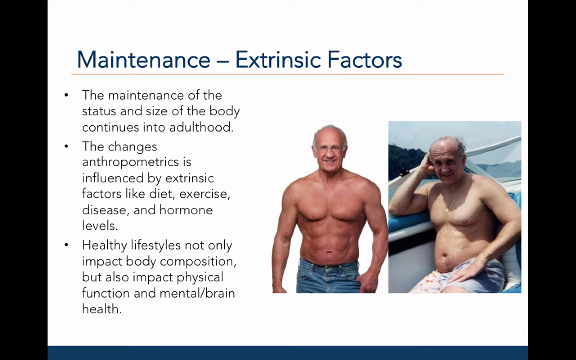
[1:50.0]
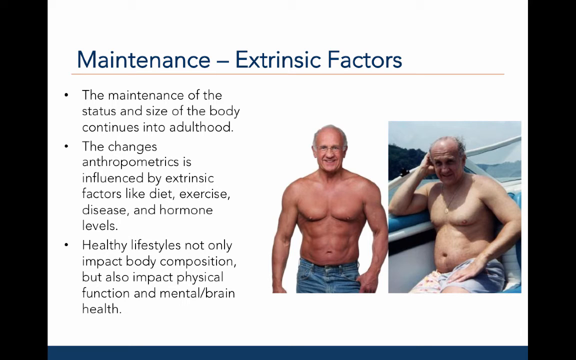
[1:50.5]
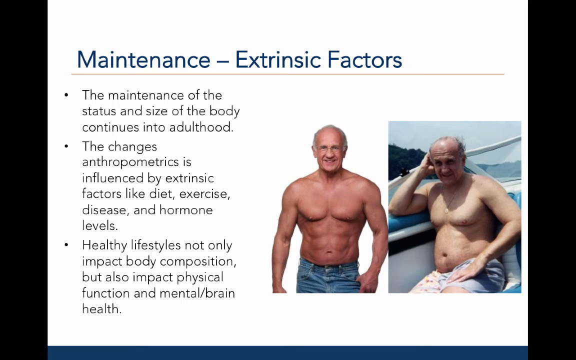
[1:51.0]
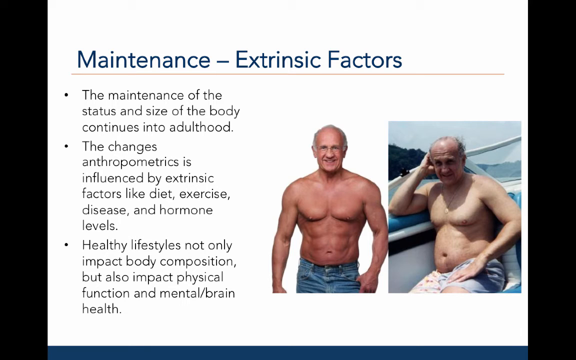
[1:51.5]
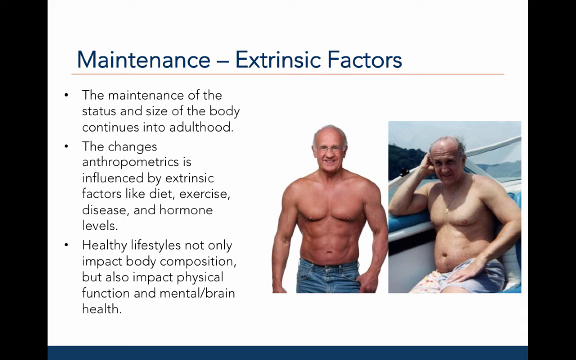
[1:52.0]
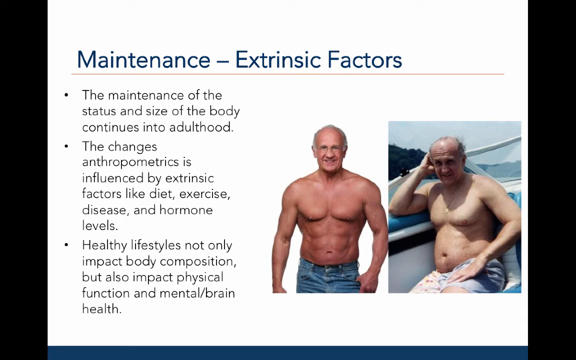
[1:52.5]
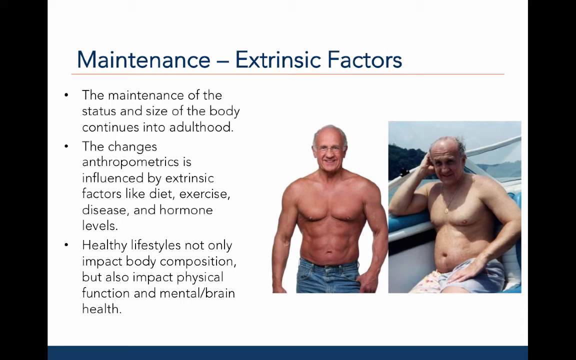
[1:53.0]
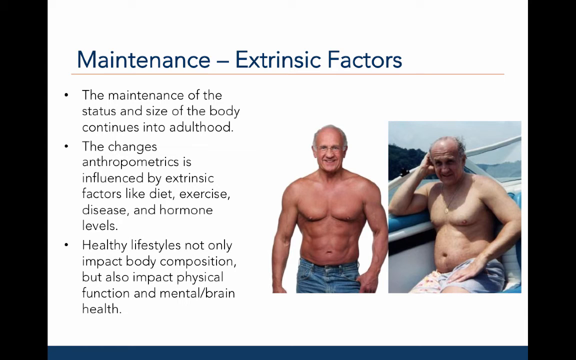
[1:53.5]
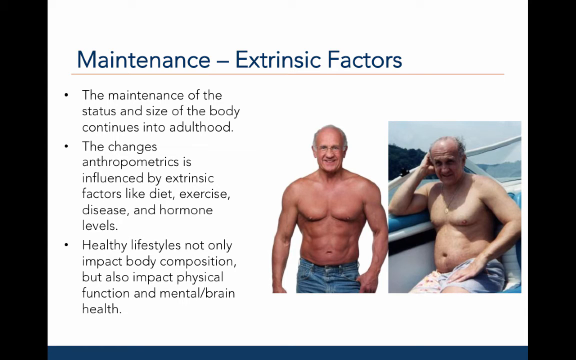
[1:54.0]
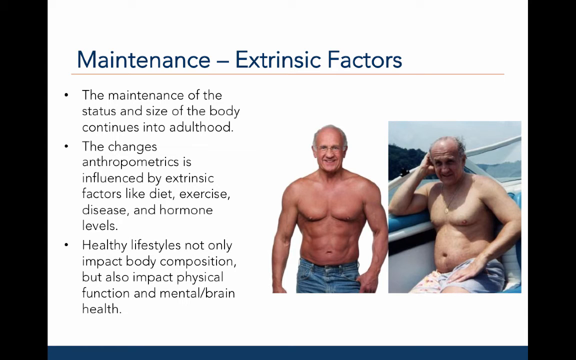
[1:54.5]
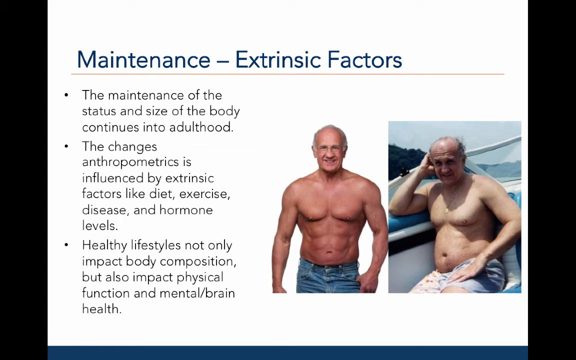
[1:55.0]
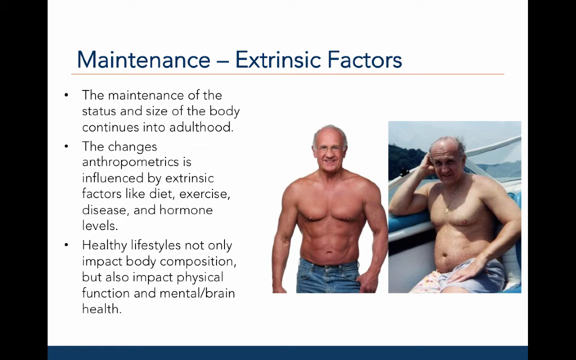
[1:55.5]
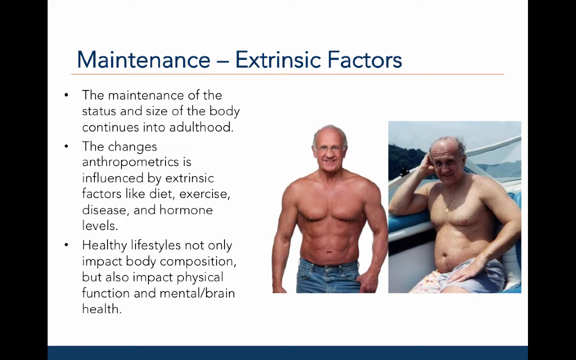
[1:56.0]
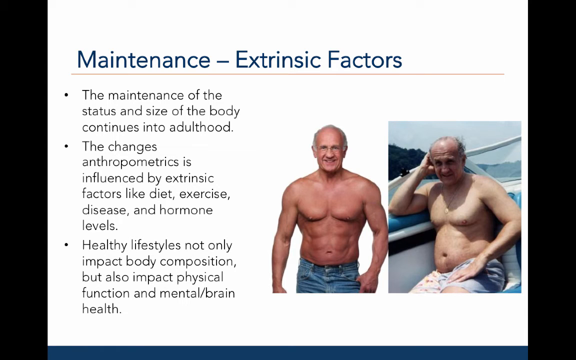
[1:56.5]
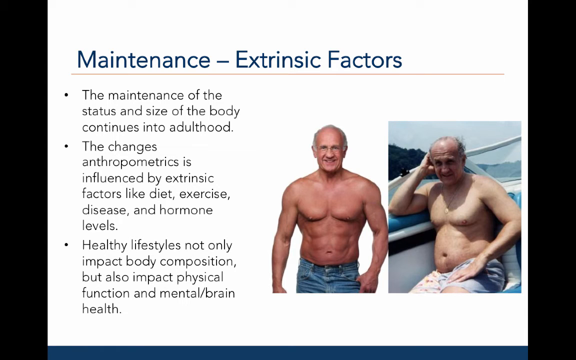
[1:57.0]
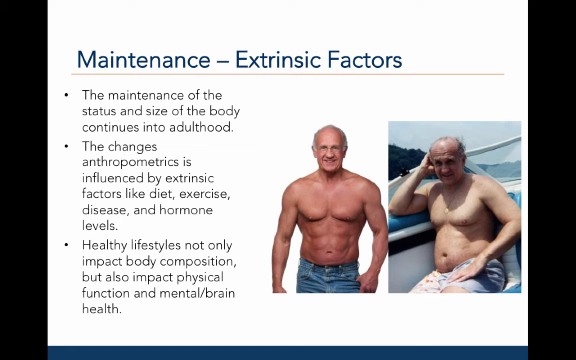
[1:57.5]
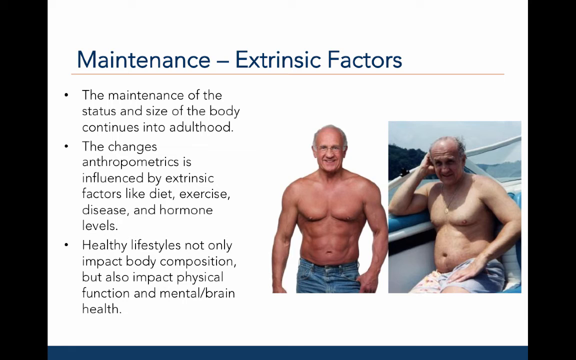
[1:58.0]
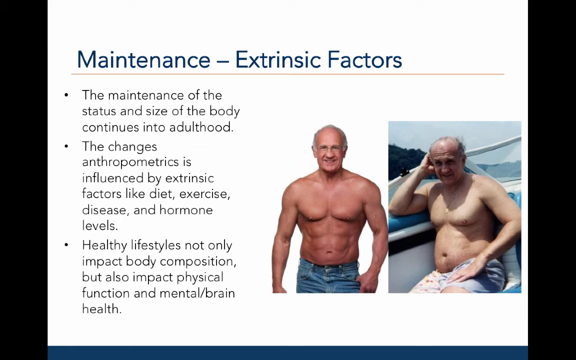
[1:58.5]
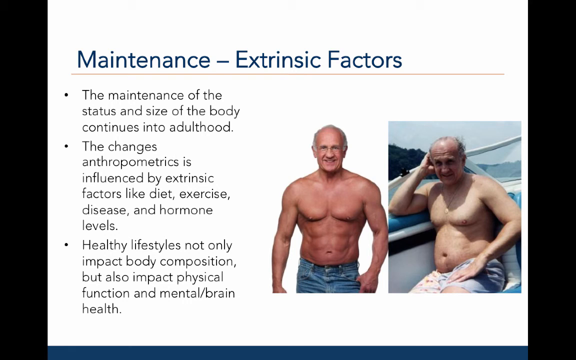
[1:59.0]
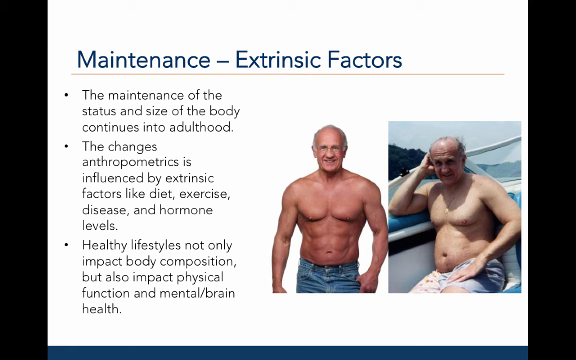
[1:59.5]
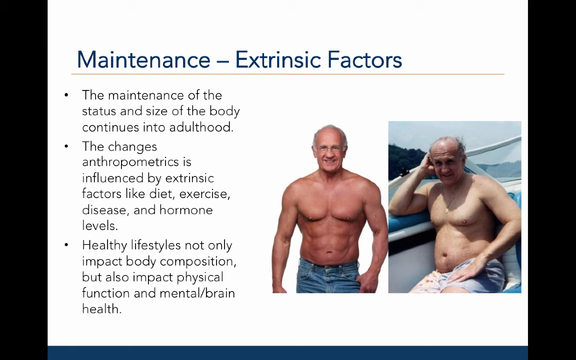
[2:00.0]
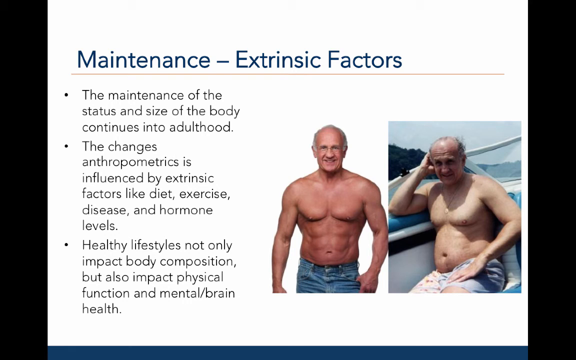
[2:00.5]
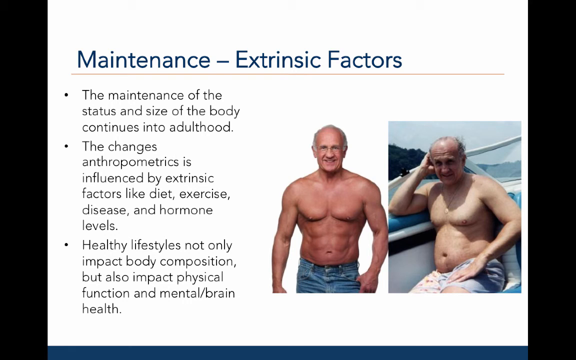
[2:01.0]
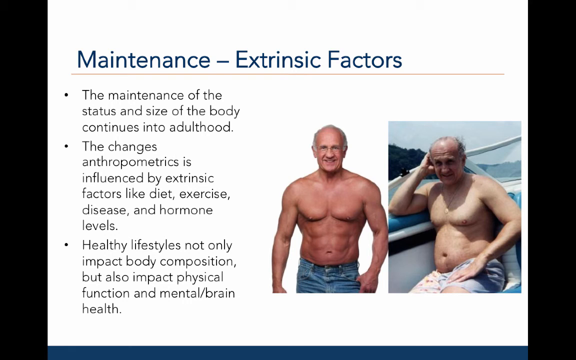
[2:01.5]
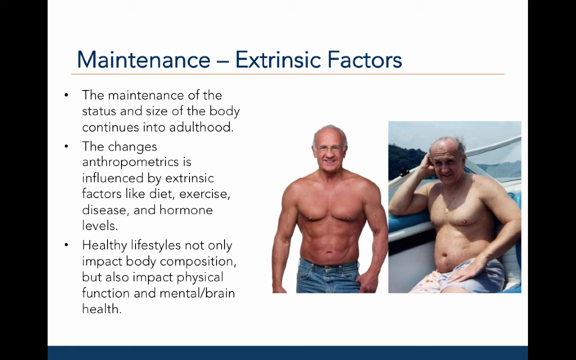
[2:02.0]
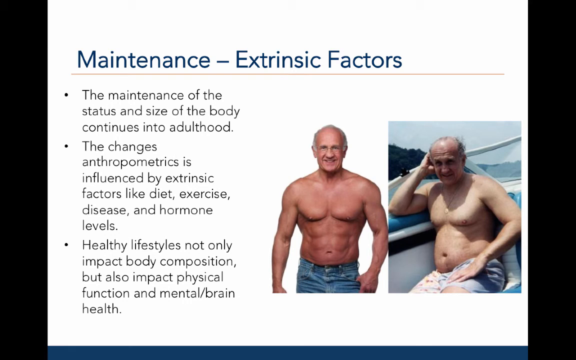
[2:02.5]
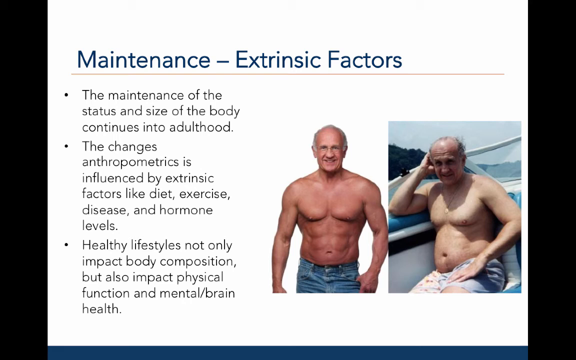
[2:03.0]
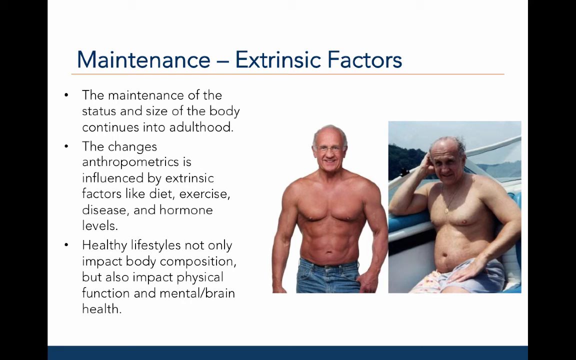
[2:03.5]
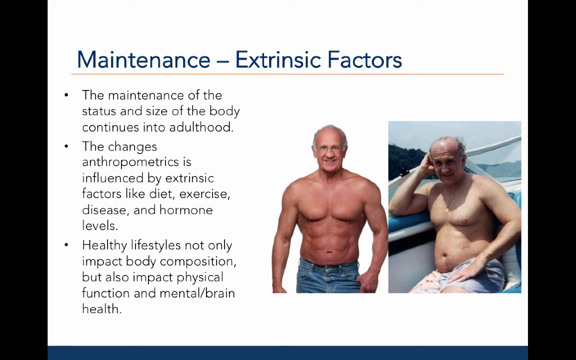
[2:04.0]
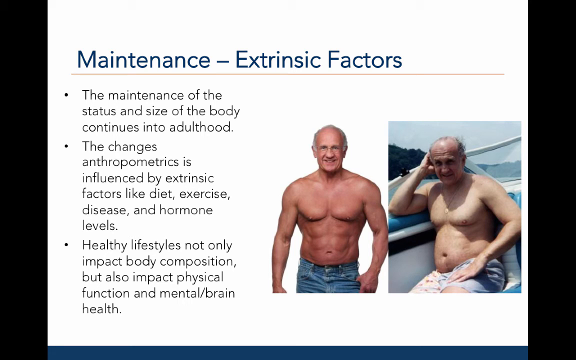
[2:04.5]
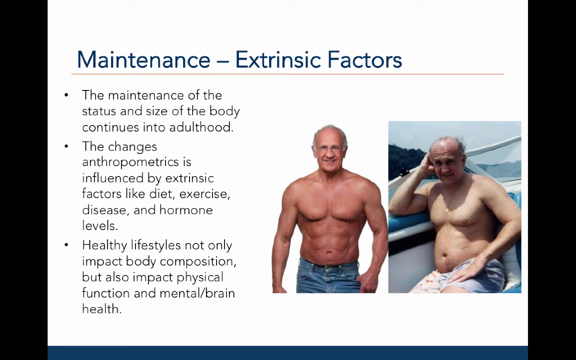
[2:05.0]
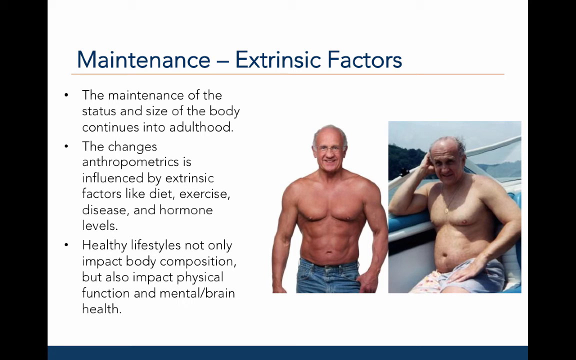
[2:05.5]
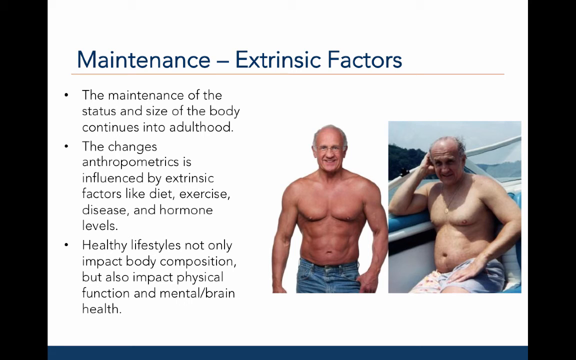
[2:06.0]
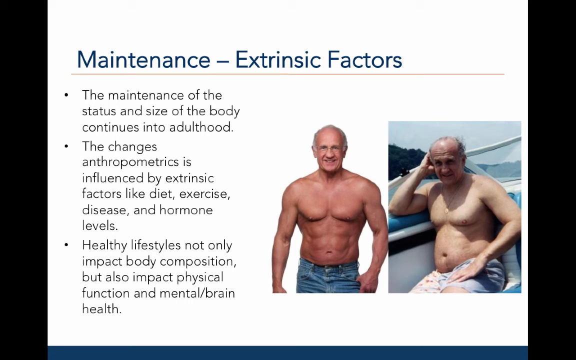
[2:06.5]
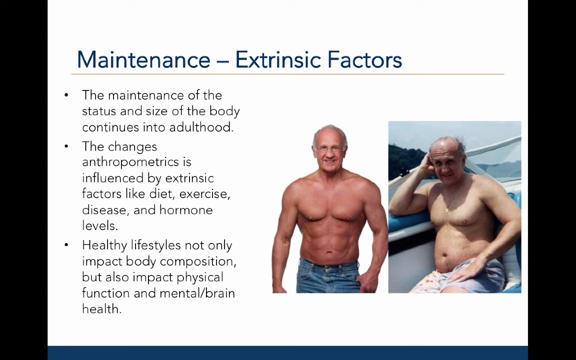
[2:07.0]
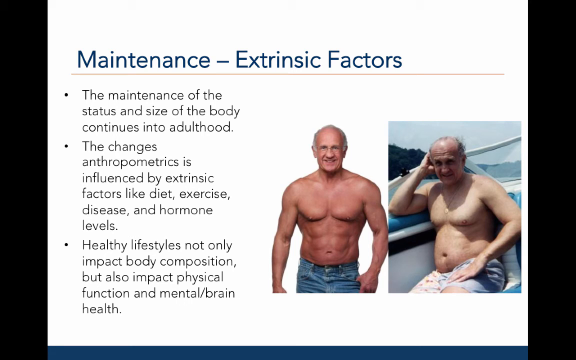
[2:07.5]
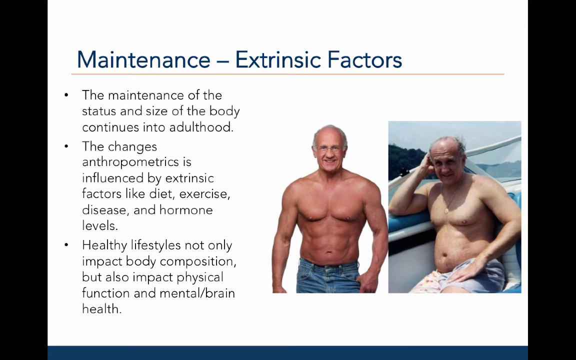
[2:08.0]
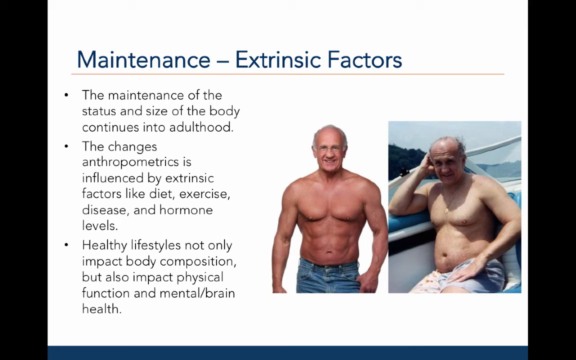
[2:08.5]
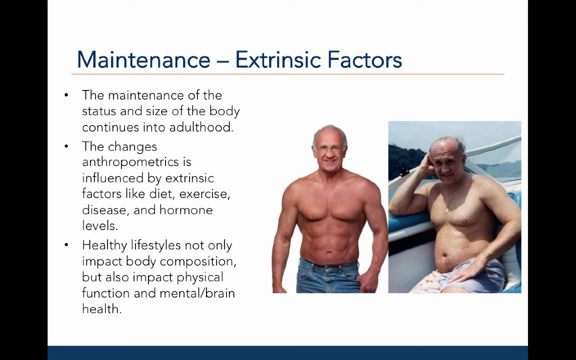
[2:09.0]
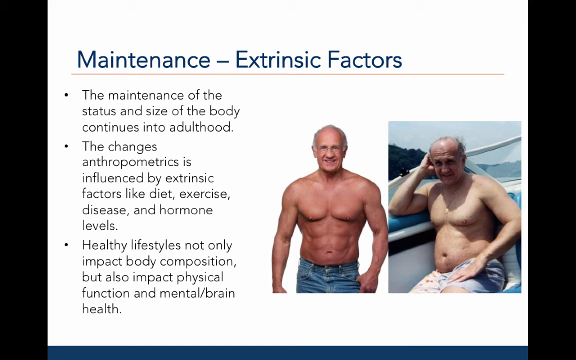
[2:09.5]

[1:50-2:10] Under the heading of maintenance and extrinsic factors, the text states that the maintenance of the status and size of the body continues in adulthood and is influenced by extrinsic factors like diets, exercise, disease, and hormone levels. It also reads "healthy lifestyles not only impact body composition, but also impact physical function and mental/brain health." A picture shows a well-built man, roughly in his 70s or 80s. Two pictures also appear side by side in contrast: a well-built man and a man who has lost his fitness, showing how healthy people look compared with people who have neglected their bodies.